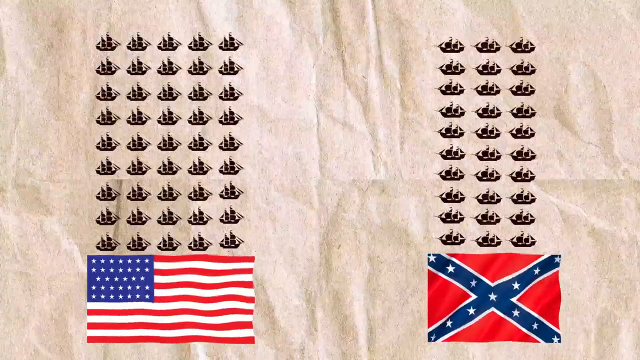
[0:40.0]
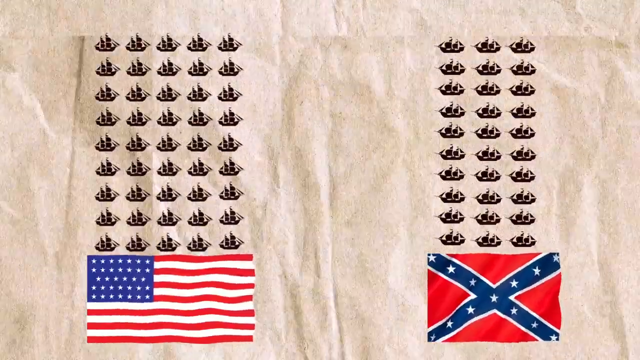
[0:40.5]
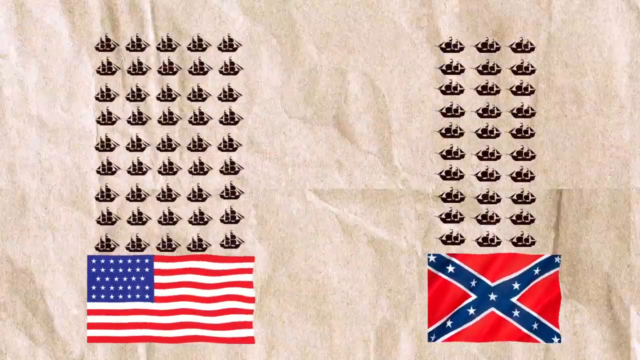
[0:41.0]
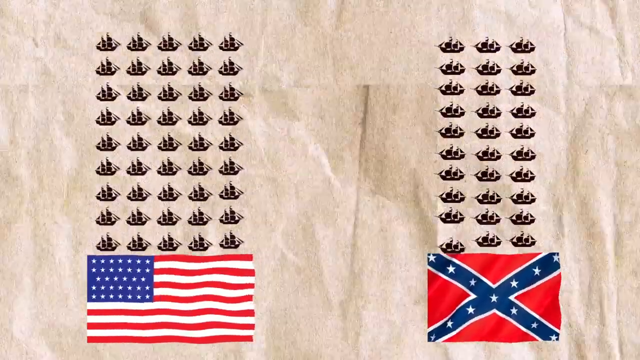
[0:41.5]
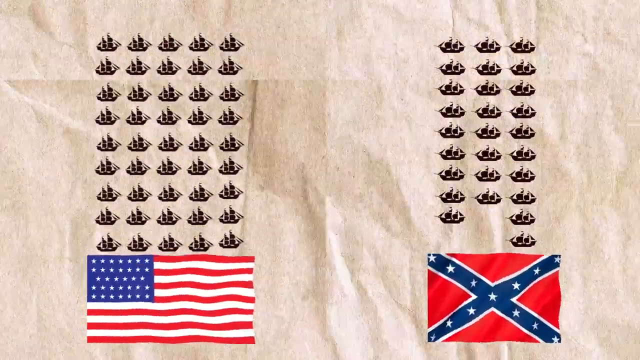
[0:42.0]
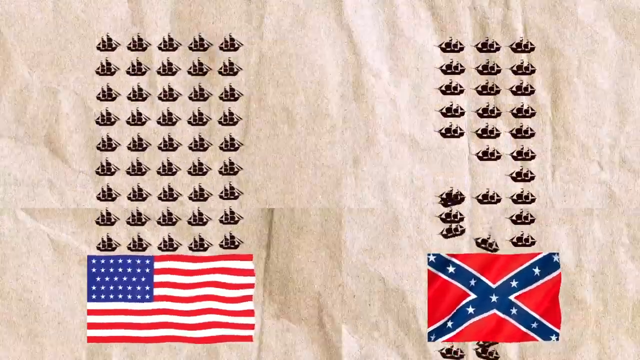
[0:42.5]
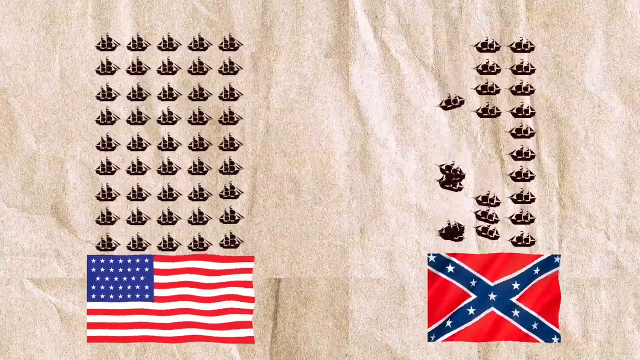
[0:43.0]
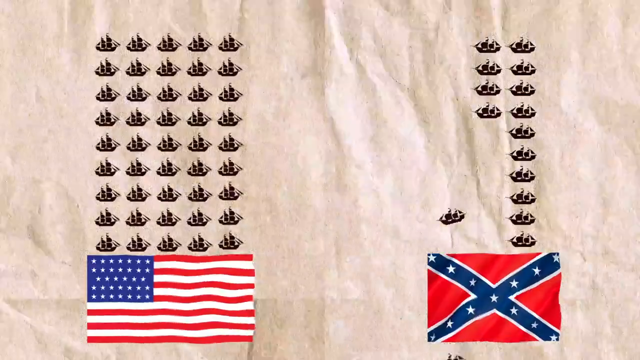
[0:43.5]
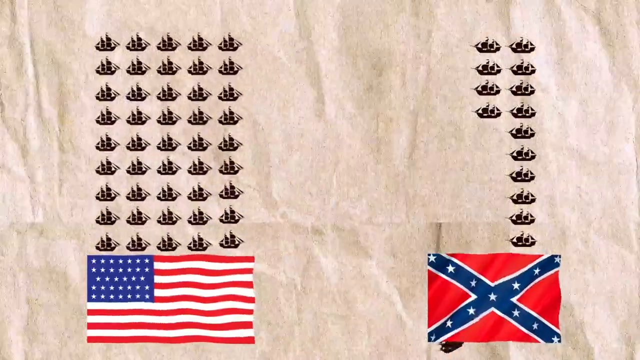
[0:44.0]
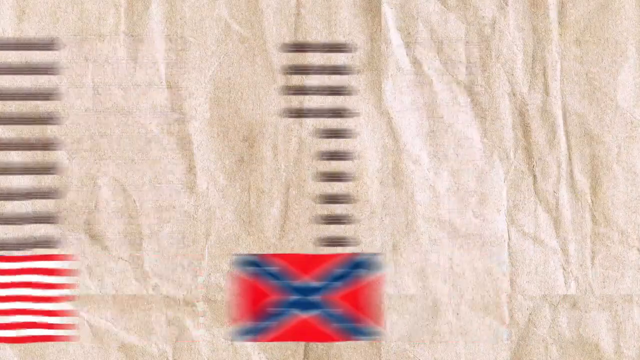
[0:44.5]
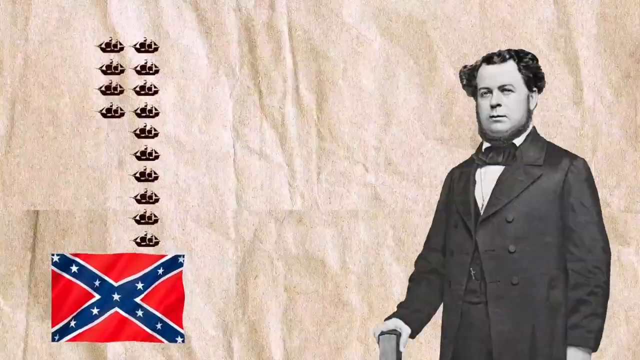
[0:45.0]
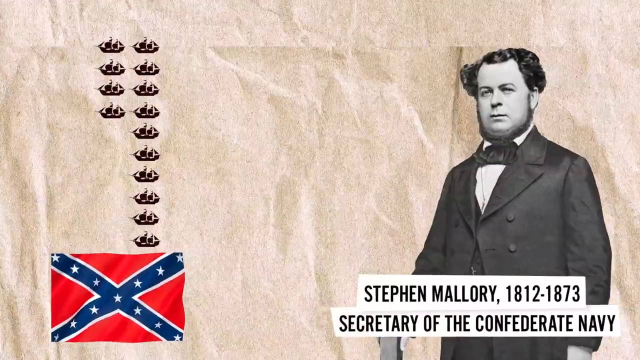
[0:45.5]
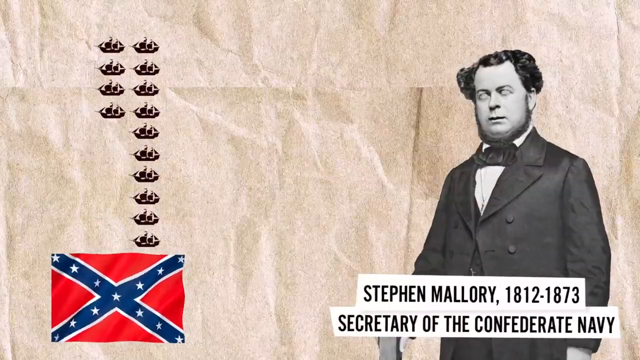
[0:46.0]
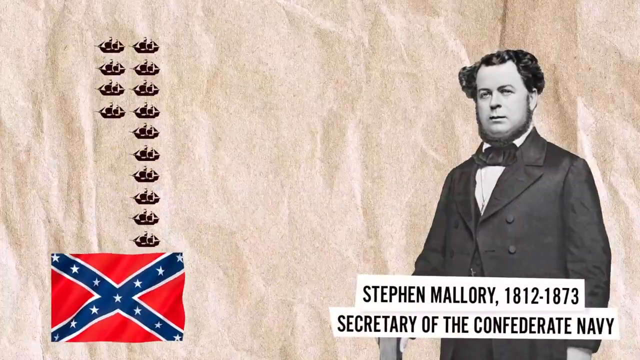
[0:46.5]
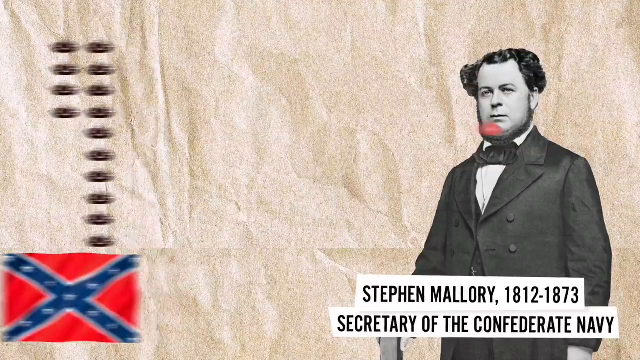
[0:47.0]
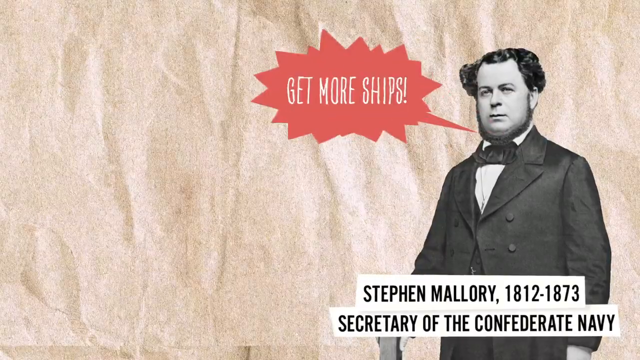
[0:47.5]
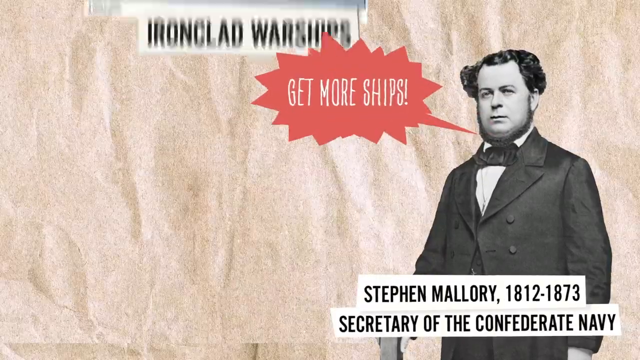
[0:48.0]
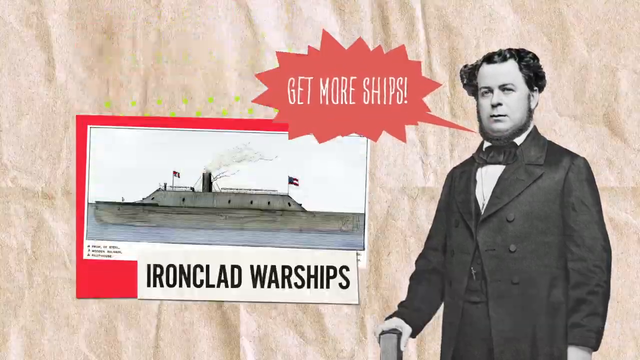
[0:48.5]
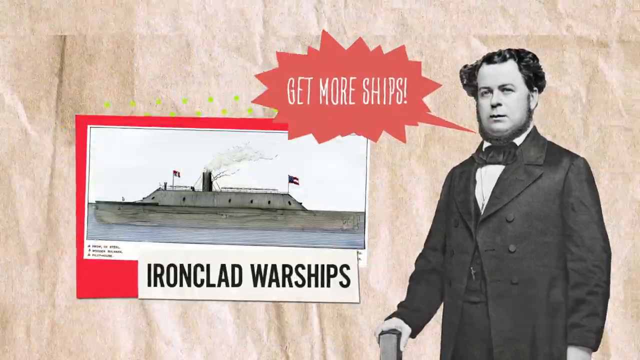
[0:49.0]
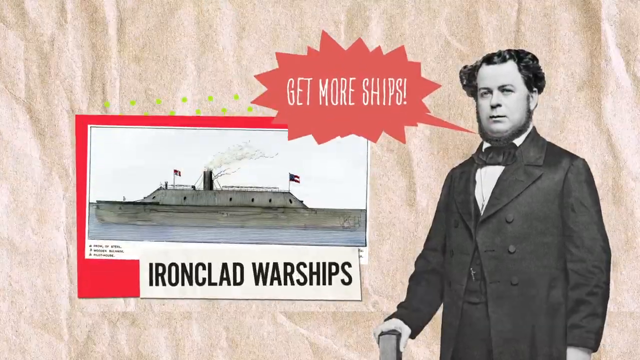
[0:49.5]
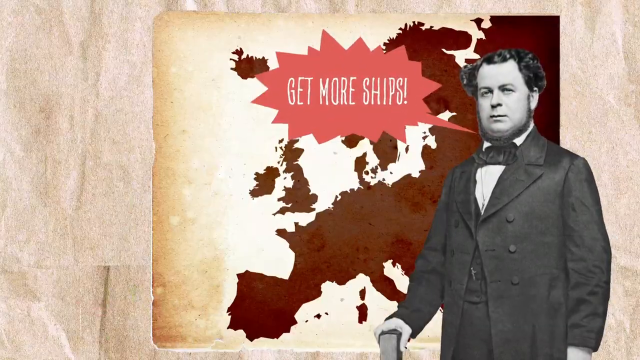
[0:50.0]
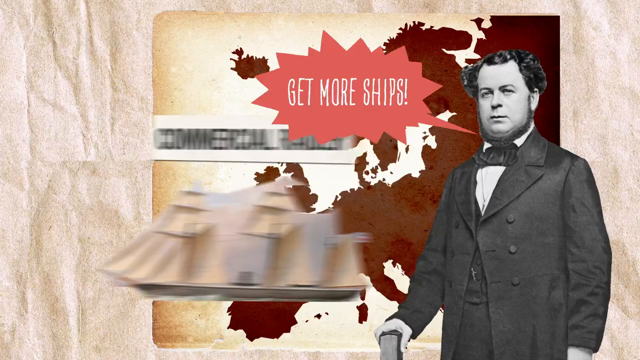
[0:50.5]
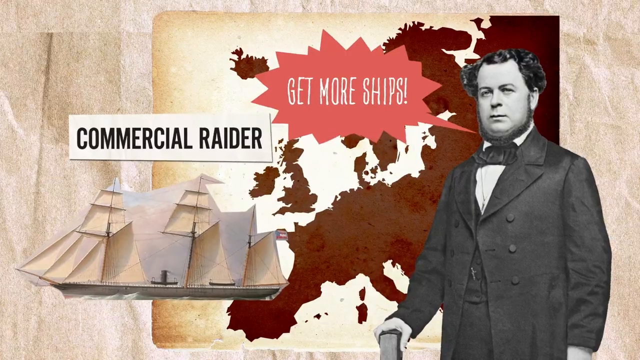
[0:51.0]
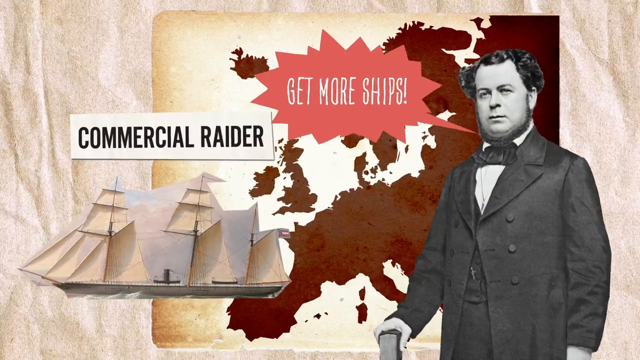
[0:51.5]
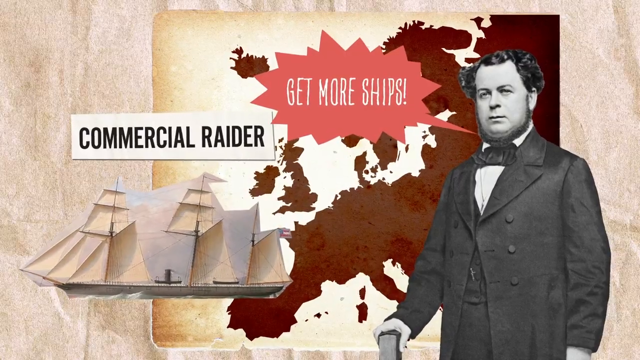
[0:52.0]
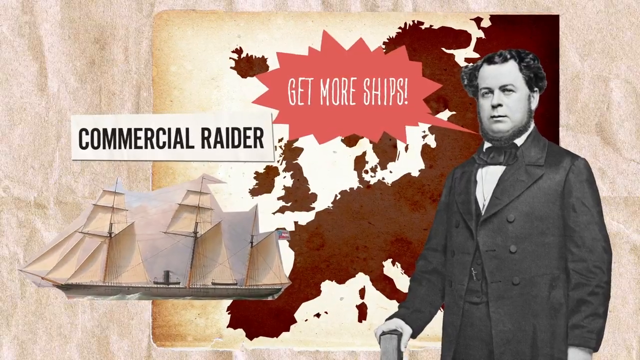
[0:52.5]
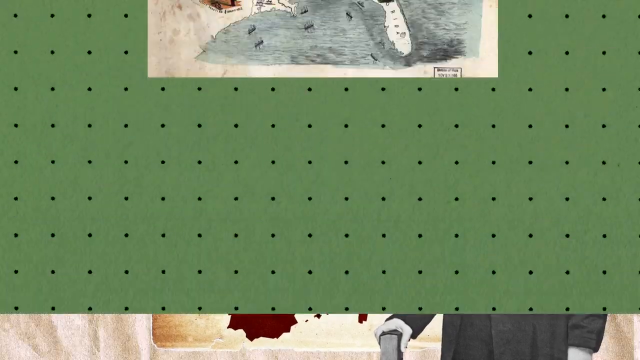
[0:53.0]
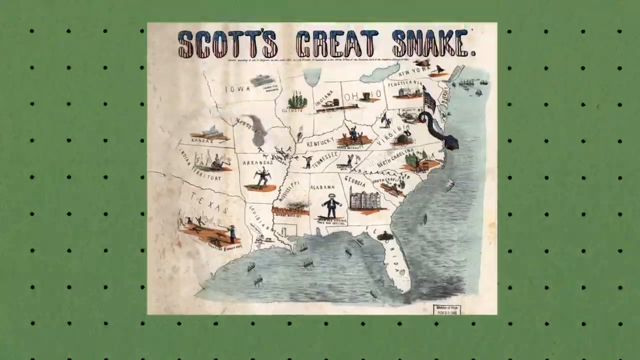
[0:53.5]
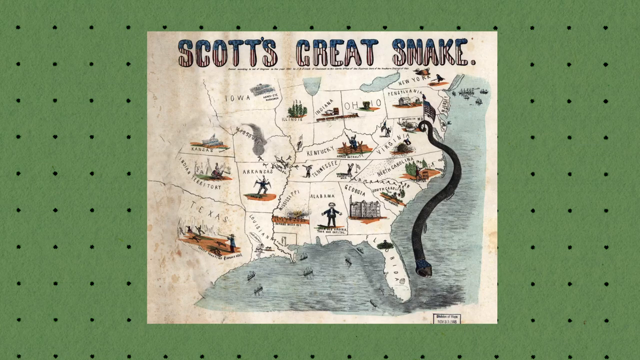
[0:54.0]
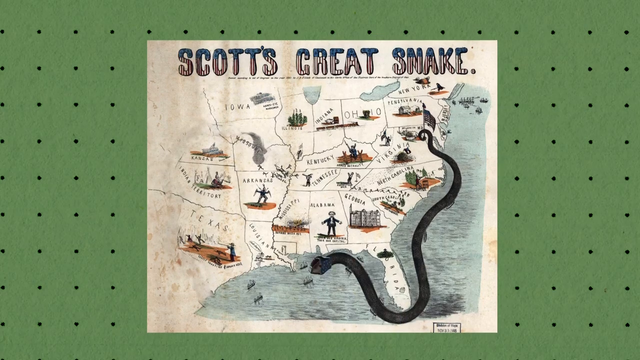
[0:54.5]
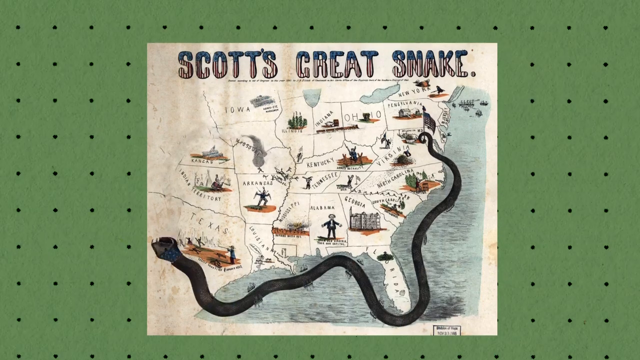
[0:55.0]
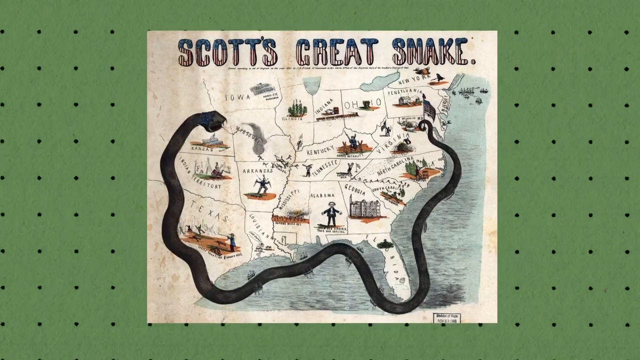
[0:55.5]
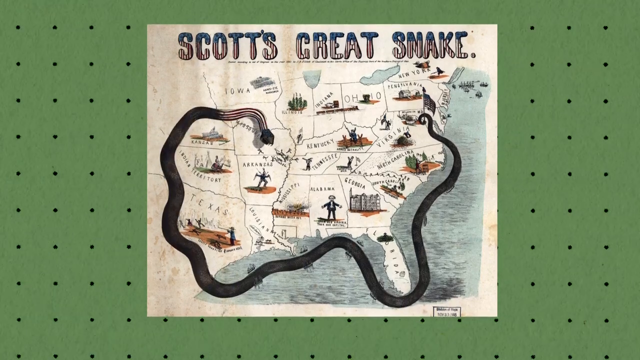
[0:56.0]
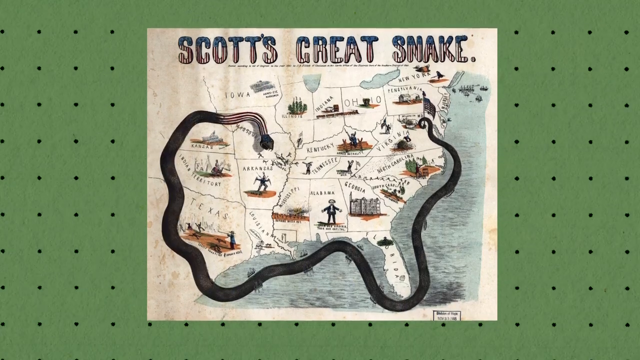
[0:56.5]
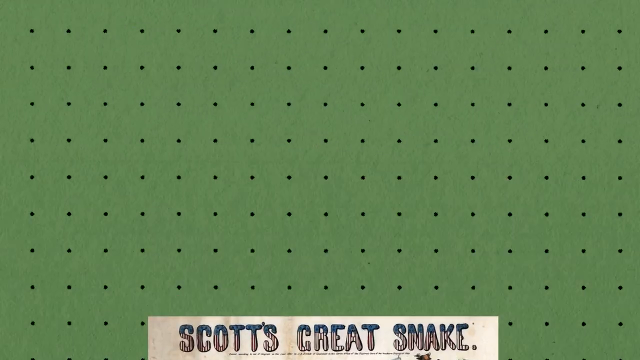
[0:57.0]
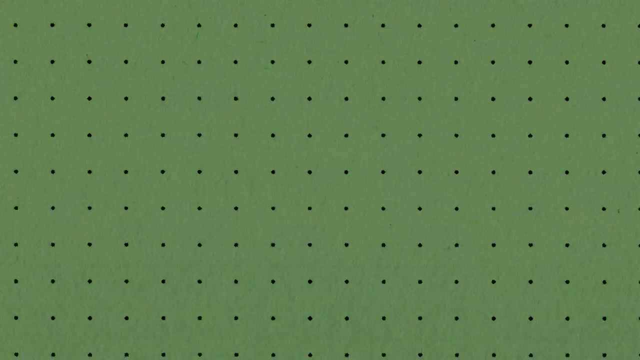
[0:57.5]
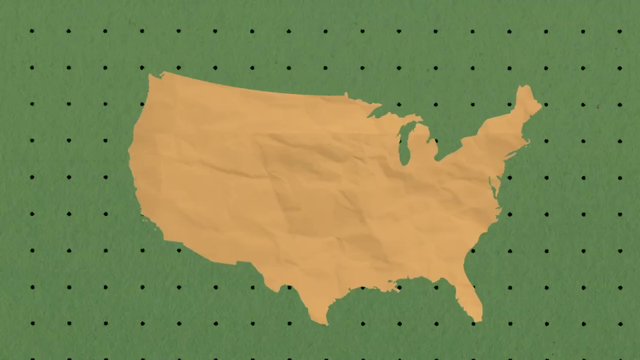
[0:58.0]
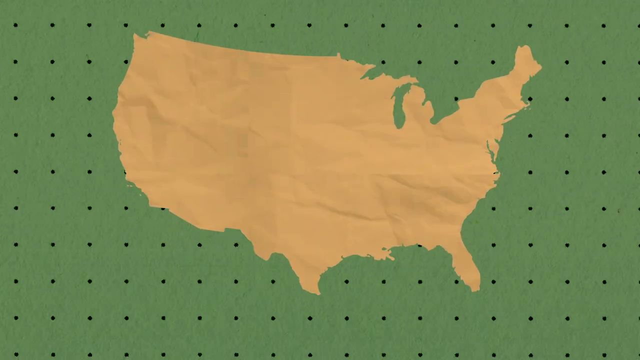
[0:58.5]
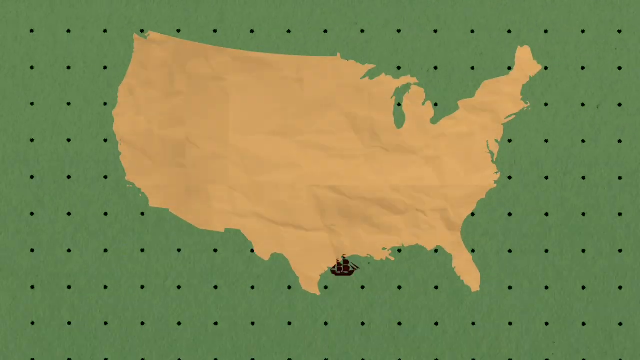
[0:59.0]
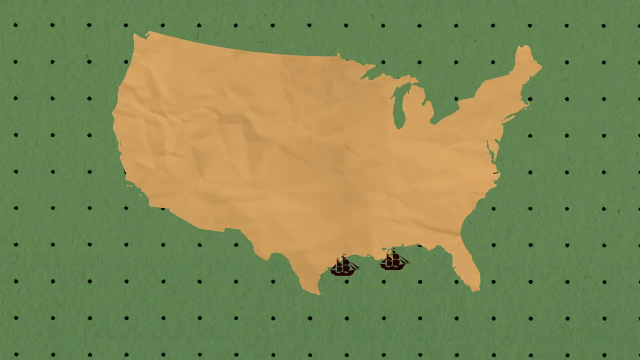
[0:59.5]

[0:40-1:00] A tan background that kind of looks like paper appears. On the left, ships are laid out in a grid pattern, nine deep and five across, with the American flag underneath them. On the right side, ships five down by three across sit over the Confederate flag. Many of the ships on the Confederate side then disappear, probably indicating they were destroyed in battle. An image of a man, apparently from a historical photograph, comes in on the right side. He wears a dark suit and has a round face and dark curly hair. Text says "Stephen Mallory, 1812 to 1873, Secretary of the Confederate Navy," and a red speech bubble coming from his mouth says "get more ships." A picture of a ship and a map are added behind him, and then a new map is shown that says "Scott's Great Snake" over an image of the early U.S. states.